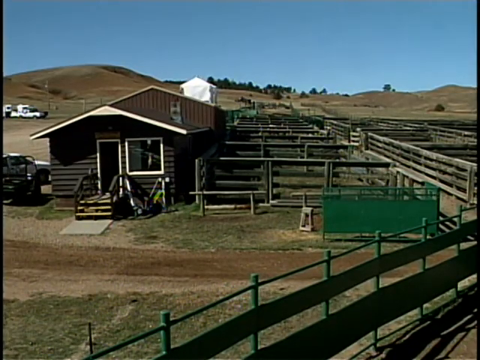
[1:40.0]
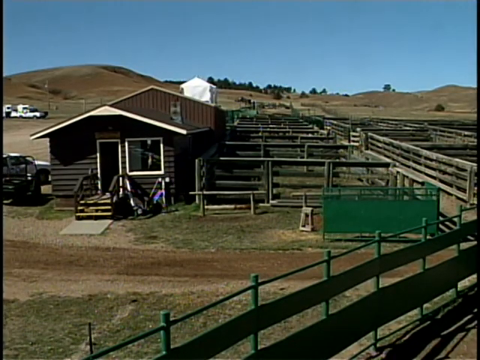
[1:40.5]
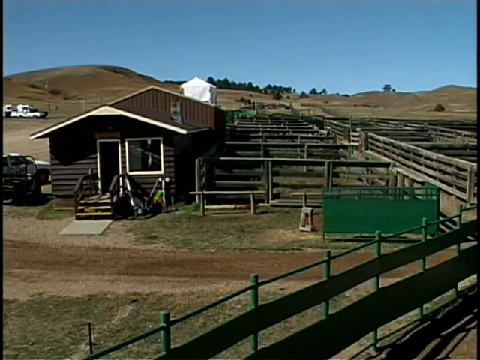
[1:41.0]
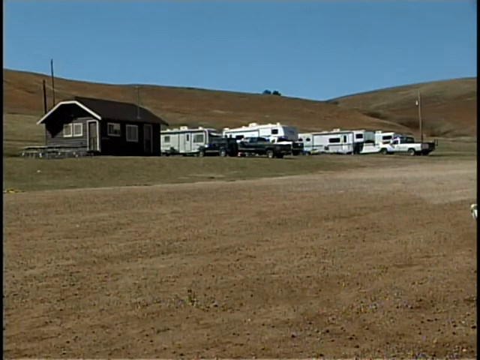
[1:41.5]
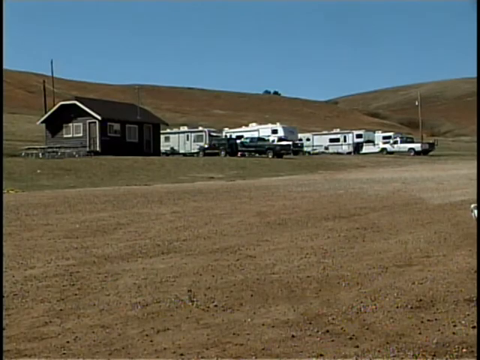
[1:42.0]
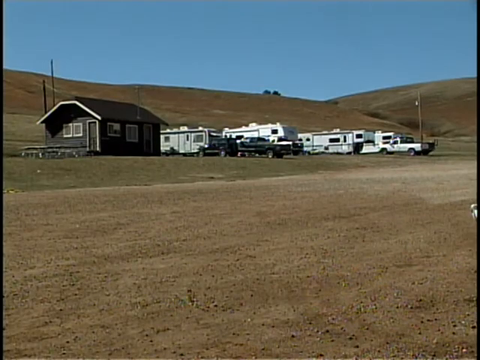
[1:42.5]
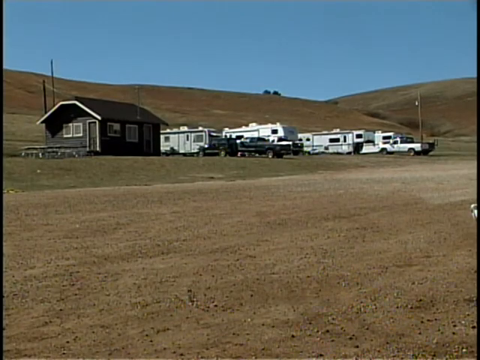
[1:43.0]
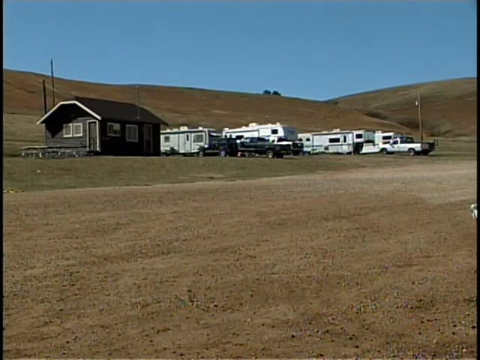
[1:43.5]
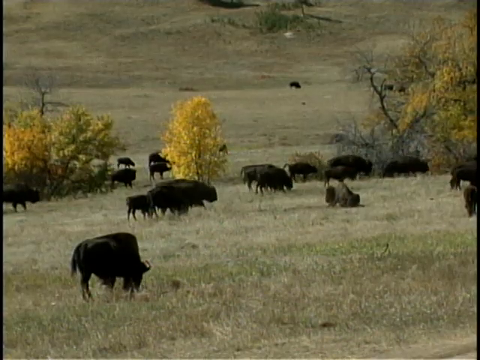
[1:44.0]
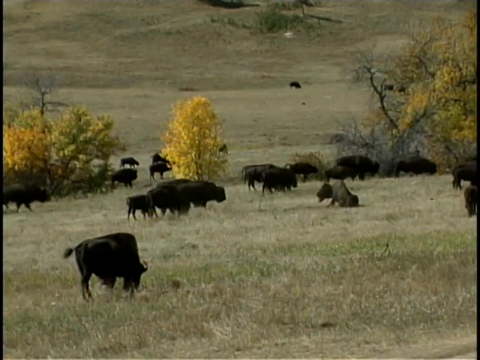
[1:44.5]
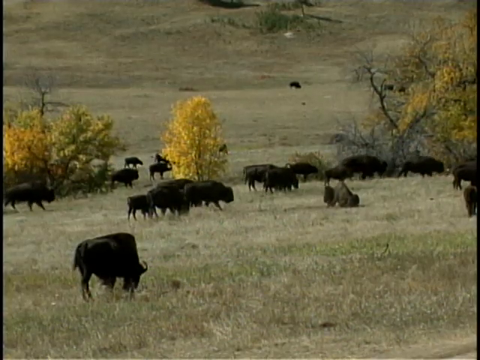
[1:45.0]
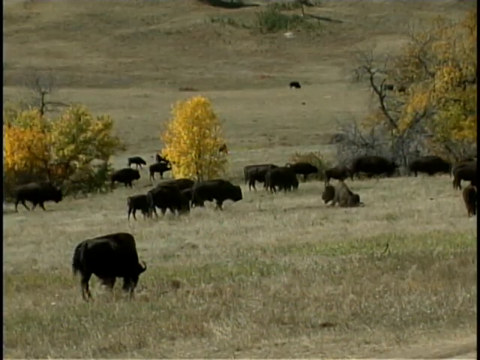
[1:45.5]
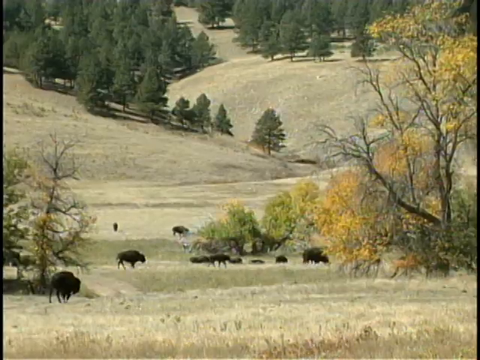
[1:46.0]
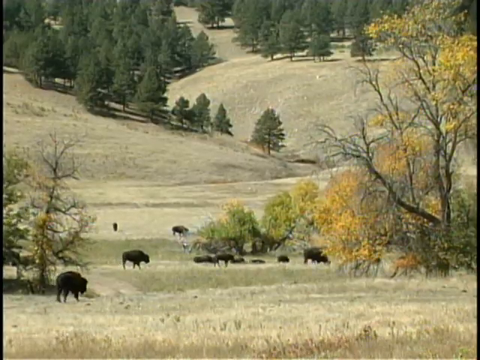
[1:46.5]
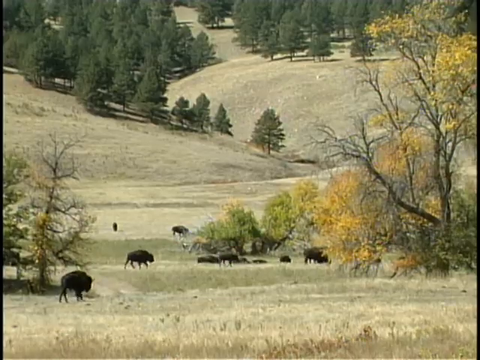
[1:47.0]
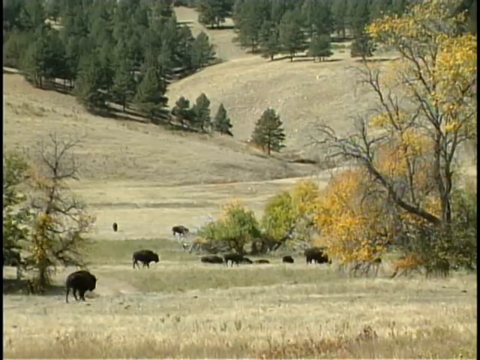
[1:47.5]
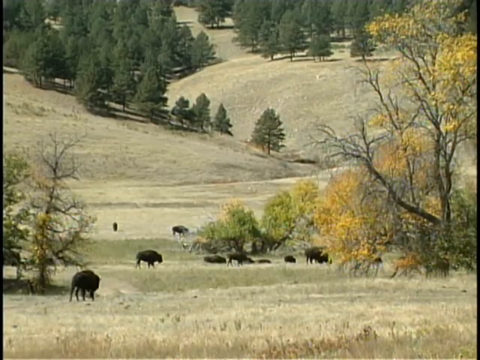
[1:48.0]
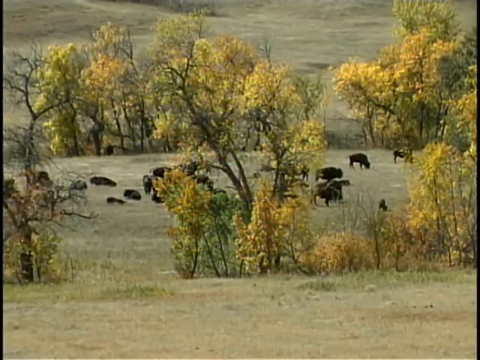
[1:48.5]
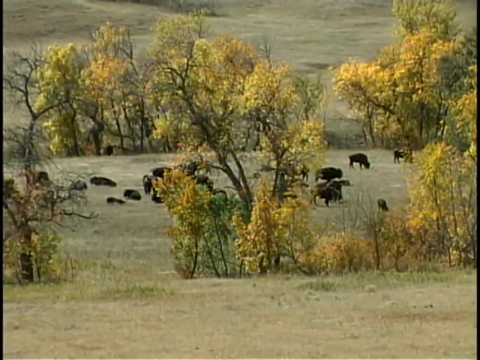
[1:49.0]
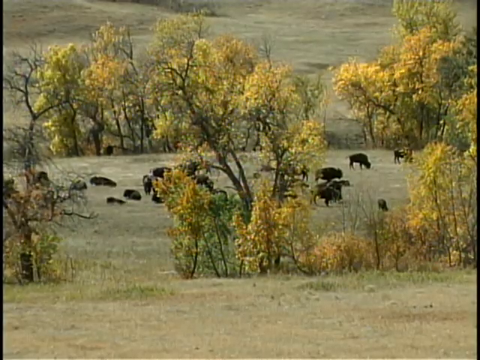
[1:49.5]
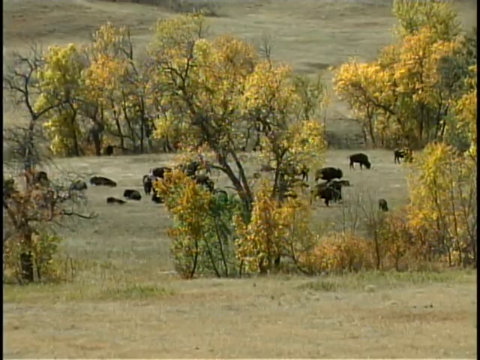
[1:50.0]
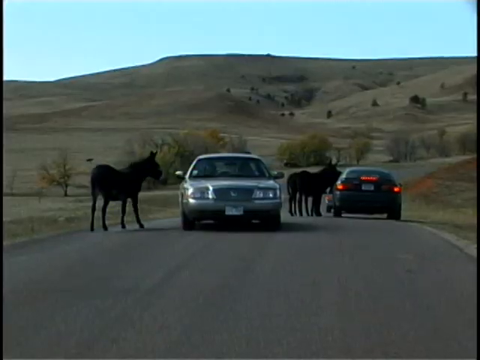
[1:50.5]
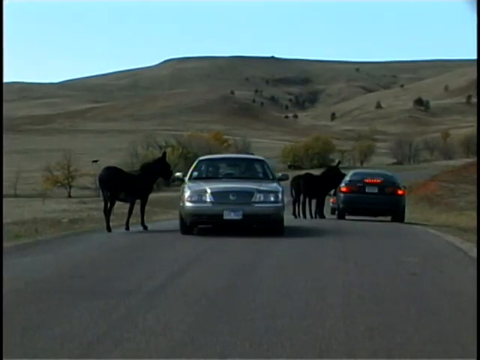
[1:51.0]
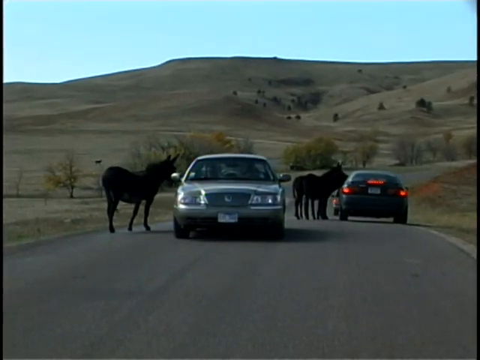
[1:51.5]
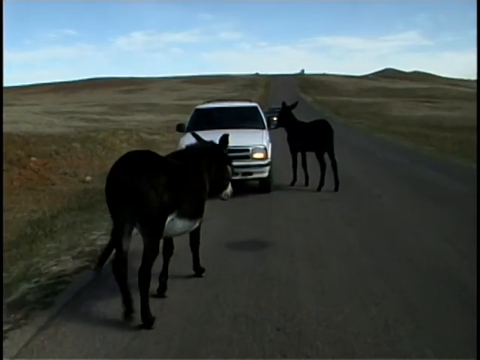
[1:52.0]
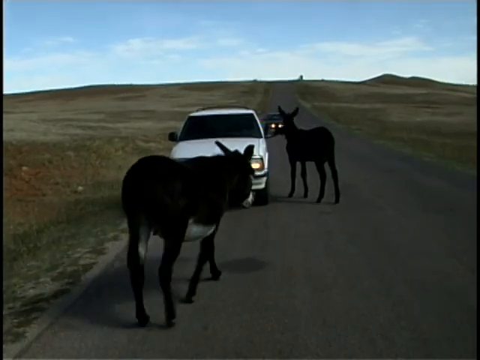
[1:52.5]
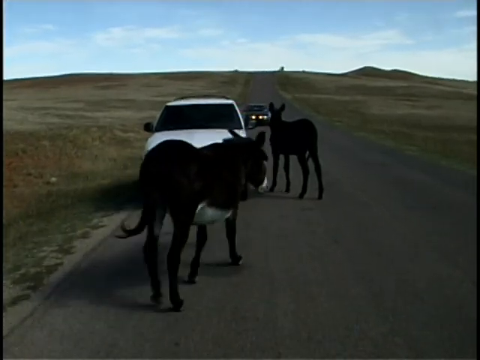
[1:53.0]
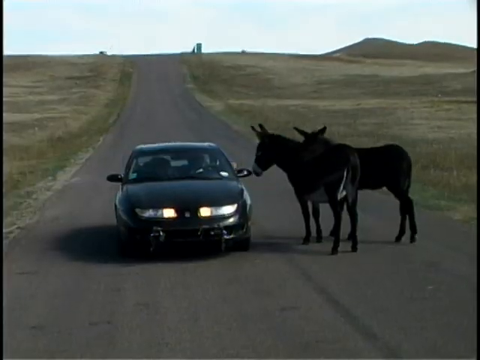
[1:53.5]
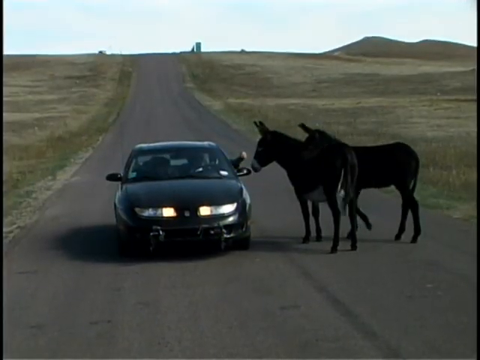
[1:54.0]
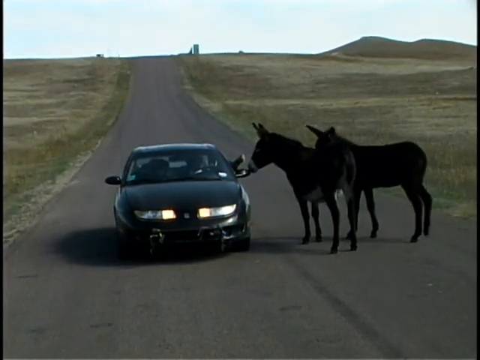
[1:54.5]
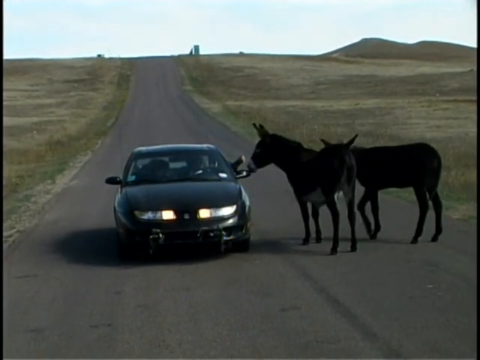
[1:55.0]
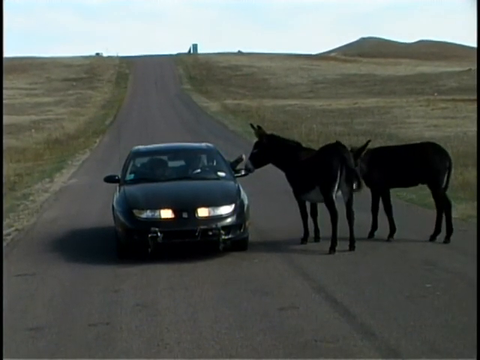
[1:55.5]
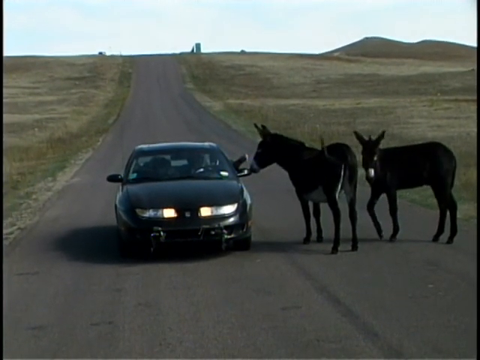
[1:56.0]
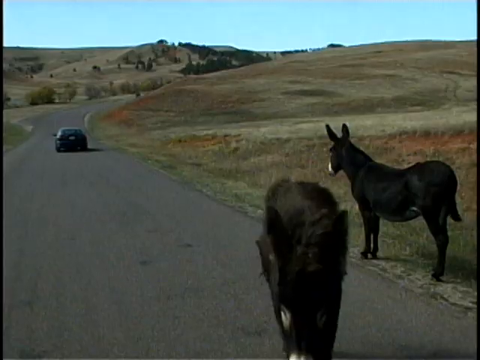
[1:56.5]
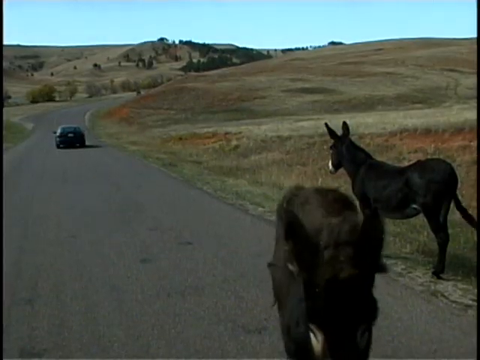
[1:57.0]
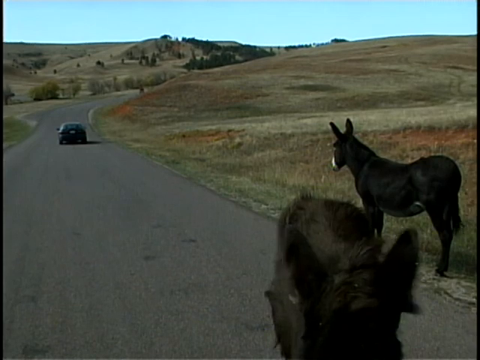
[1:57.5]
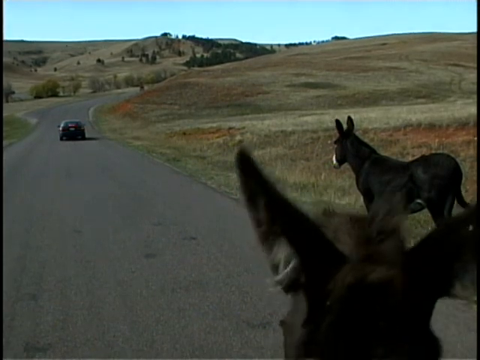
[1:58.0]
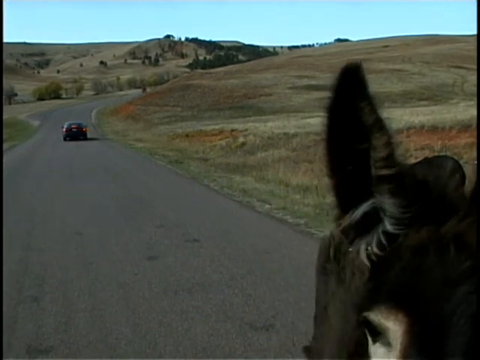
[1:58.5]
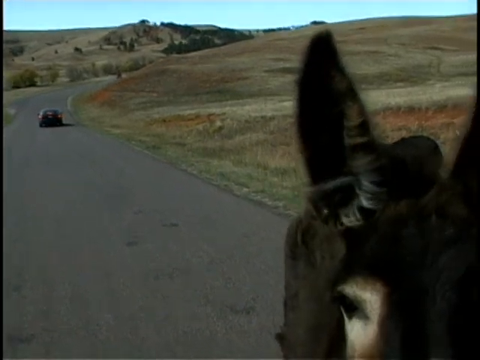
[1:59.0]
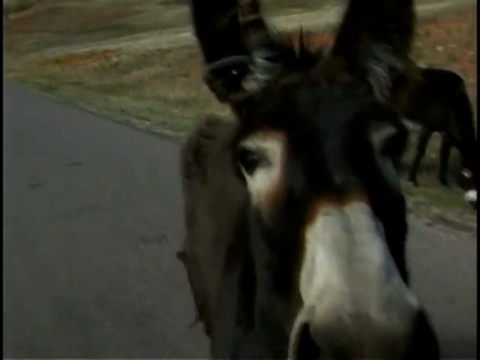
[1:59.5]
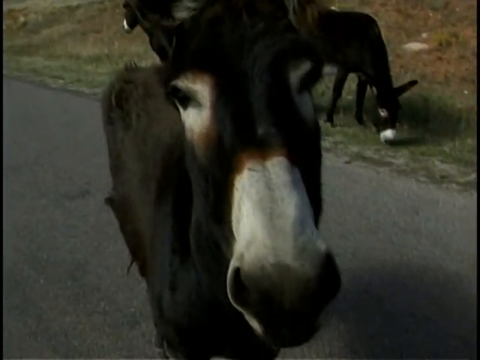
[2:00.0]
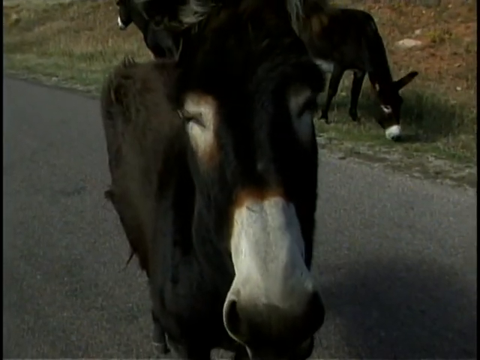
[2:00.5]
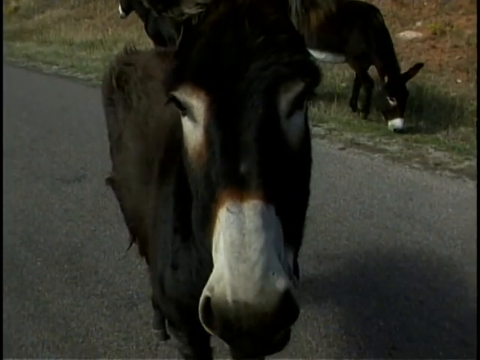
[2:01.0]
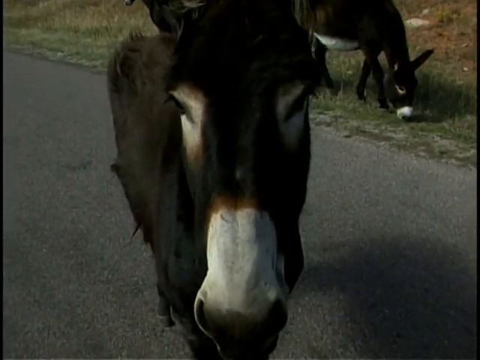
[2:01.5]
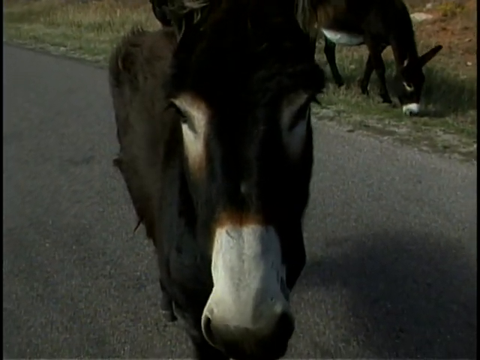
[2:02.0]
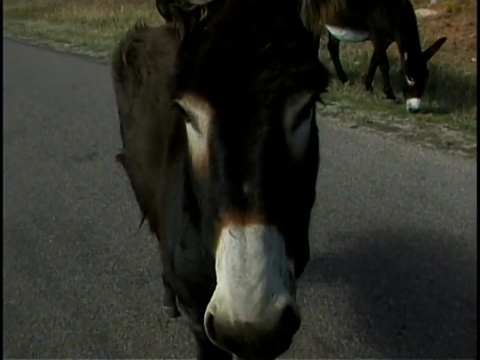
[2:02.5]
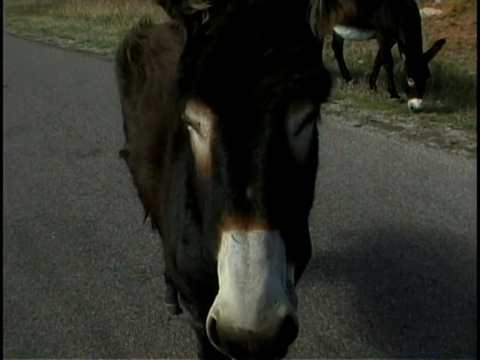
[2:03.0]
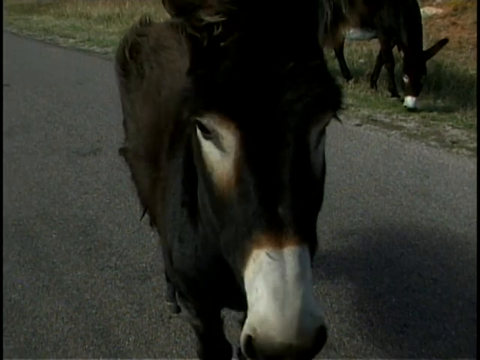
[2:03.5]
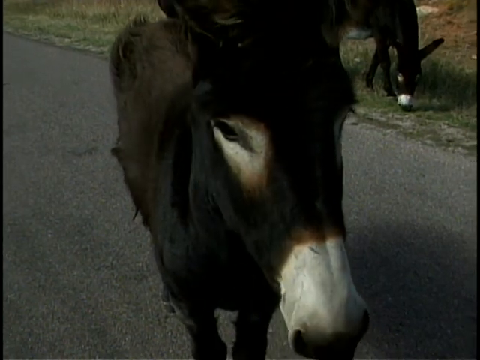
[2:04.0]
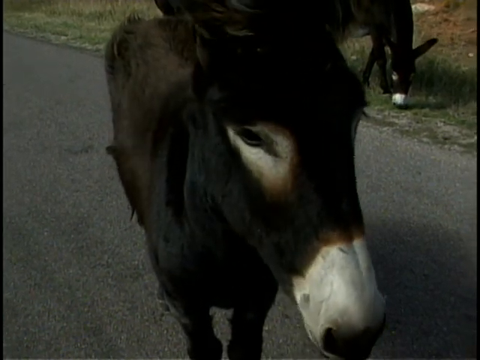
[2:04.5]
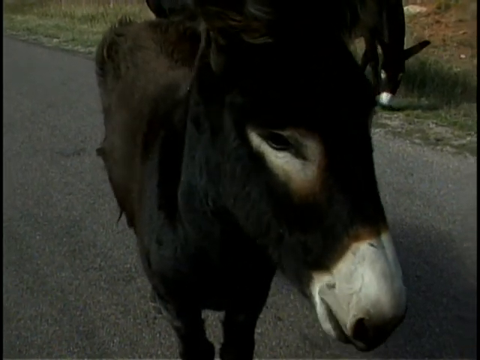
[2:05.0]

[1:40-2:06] A house made of timber with a glass window appears, along with other structures that have gates, also made of timber, and another structure made of steel. Vehicles are parked there, and the camera focuses on a number of them; mobile houses are also shown. The camera then focuses on a road running through the field, where vehicles stop in the middle of the road and people interact with a group of animals. Some people stop their vehicles to see and interact with the animals, and a large group of people is also there. The animals are very big and look like cows, but seem not to be cows.